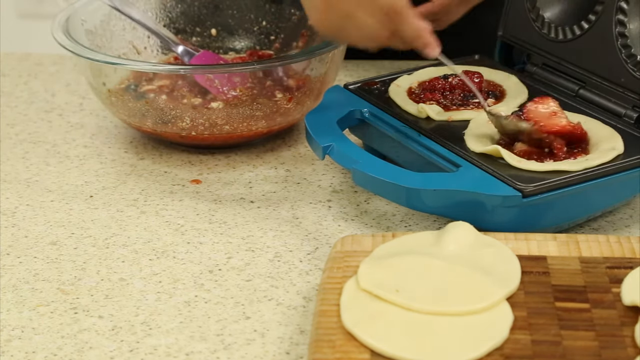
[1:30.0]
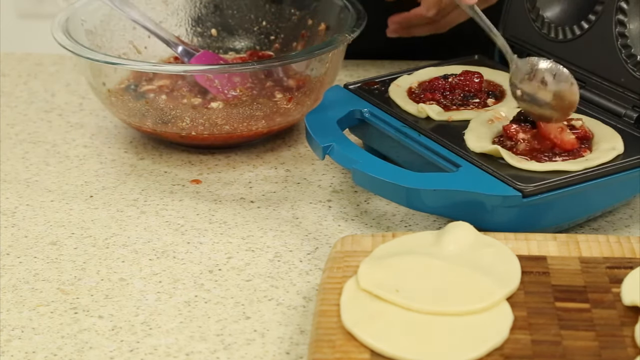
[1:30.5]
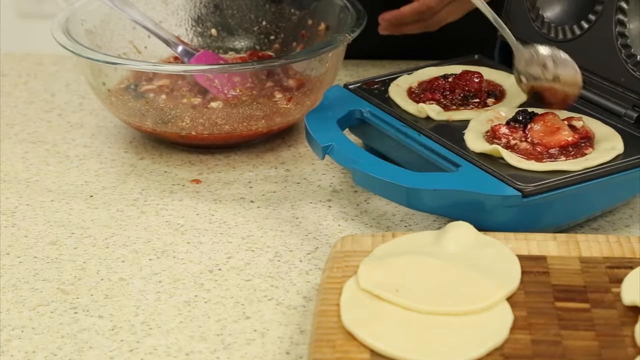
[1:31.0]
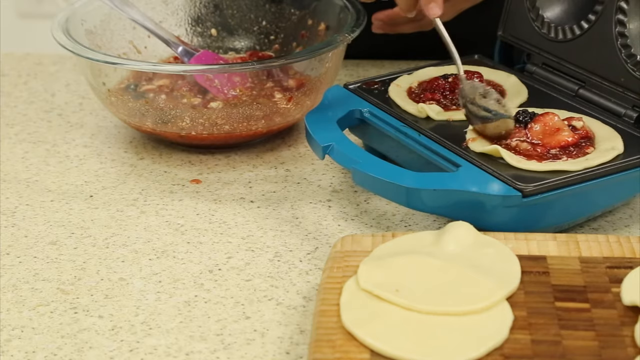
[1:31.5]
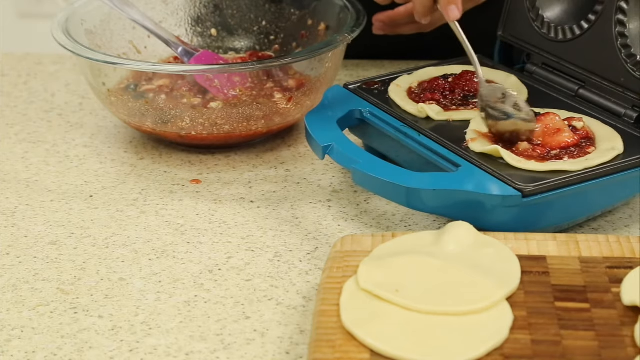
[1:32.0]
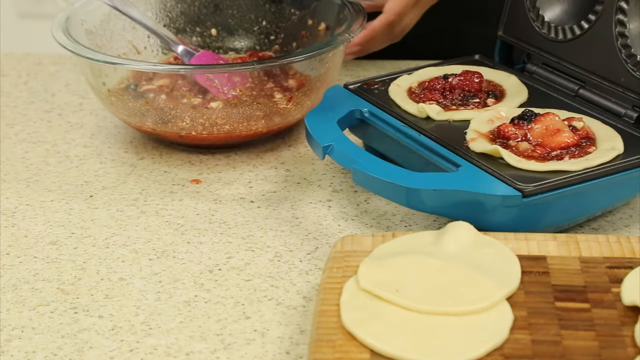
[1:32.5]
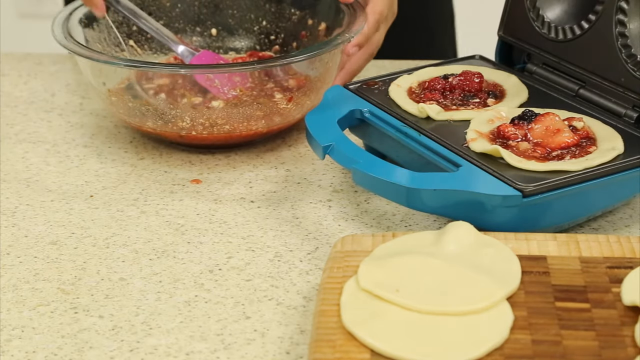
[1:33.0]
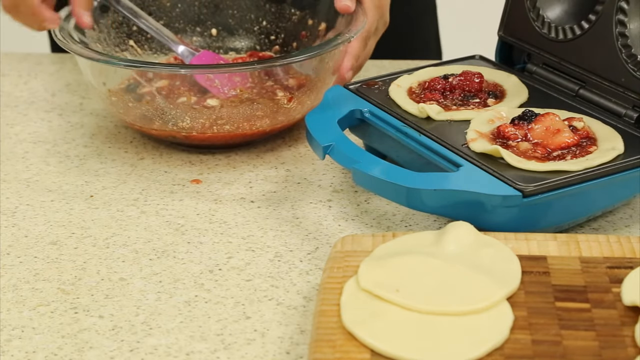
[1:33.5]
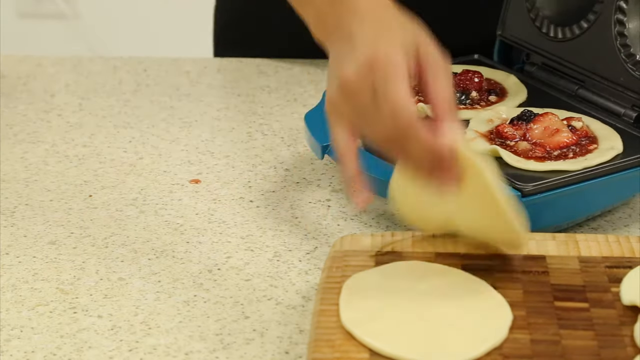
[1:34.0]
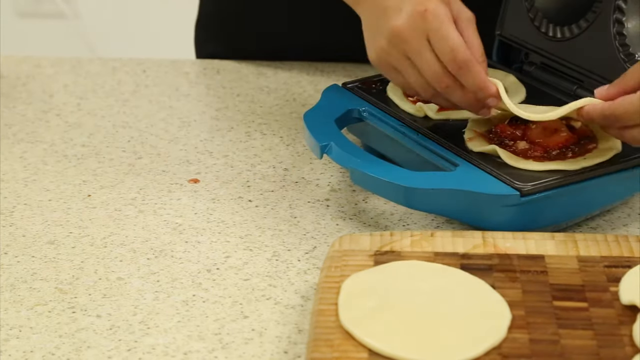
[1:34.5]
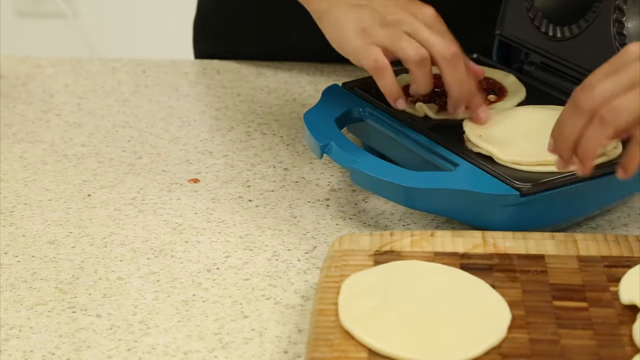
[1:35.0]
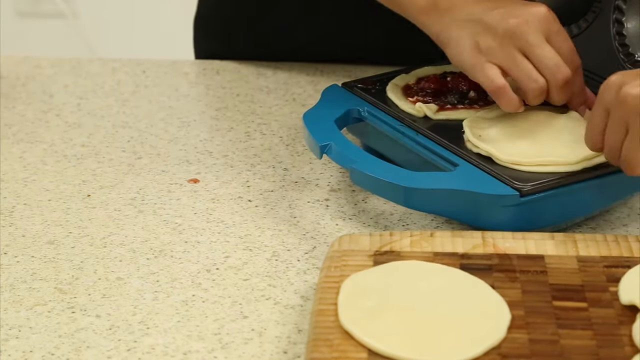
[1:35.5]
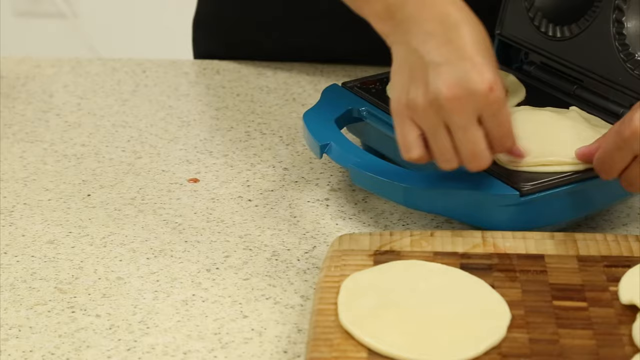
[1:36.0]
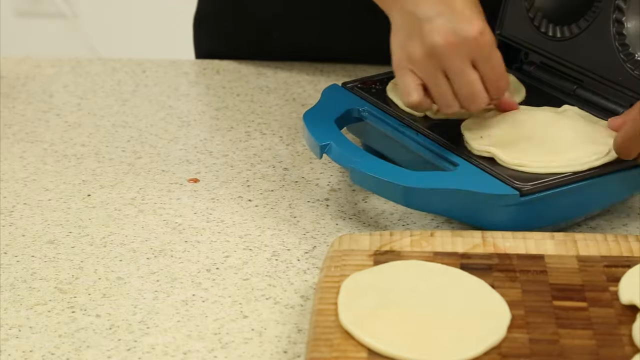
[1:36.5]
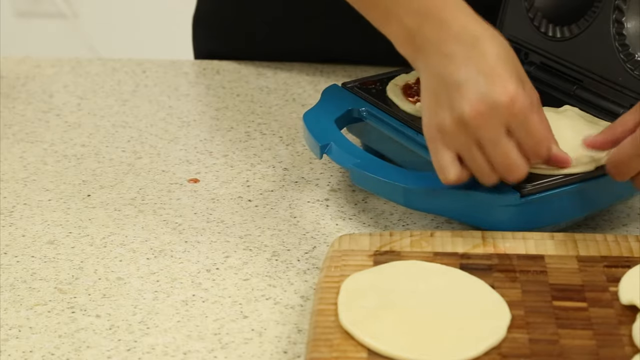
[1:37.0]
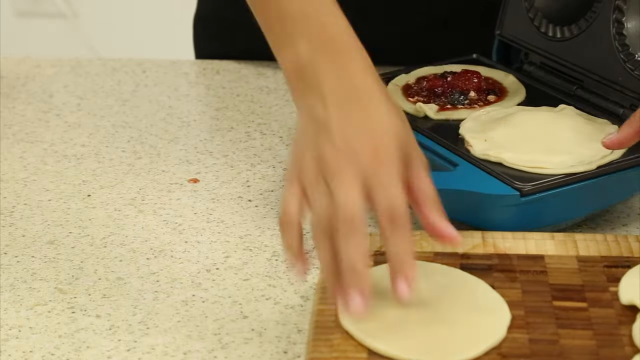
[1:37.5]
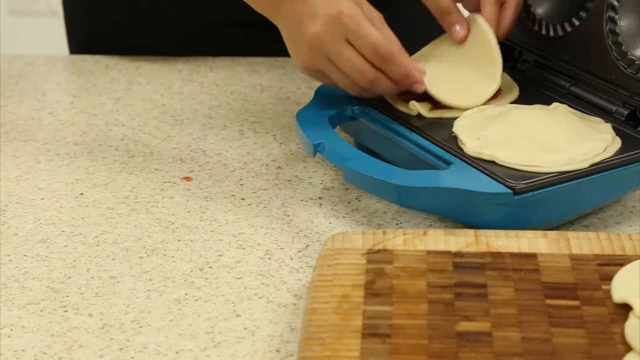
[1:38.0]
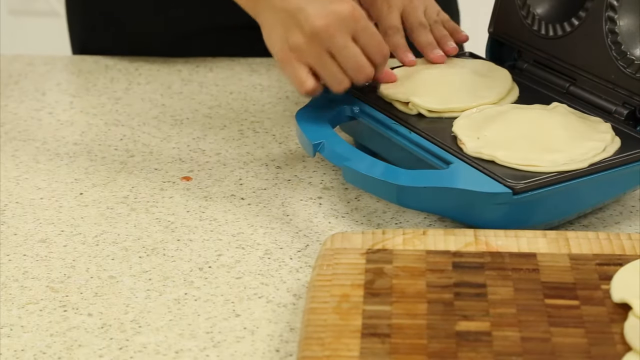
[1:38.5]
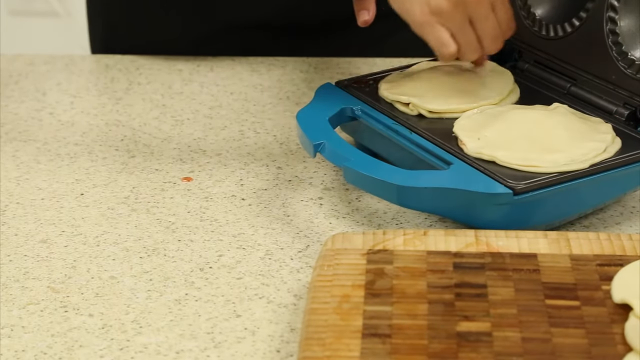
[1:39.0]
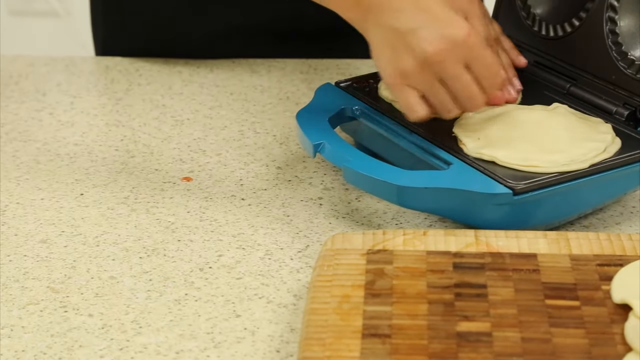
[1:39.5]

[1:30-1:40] The man uses a silver spoon to pour the filling onto a circular piece of dough placed inside the toaster. He takes another piece of dough and covers the filling, forming a pie, then uses his fingers to gently press the edges of the two doughs together so the filling stays inside. The tool is blue and big, and it can make two pies at once. There is a cutting board nearby where the dough is kept.